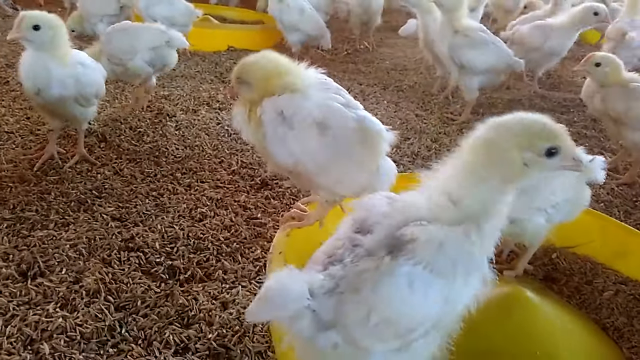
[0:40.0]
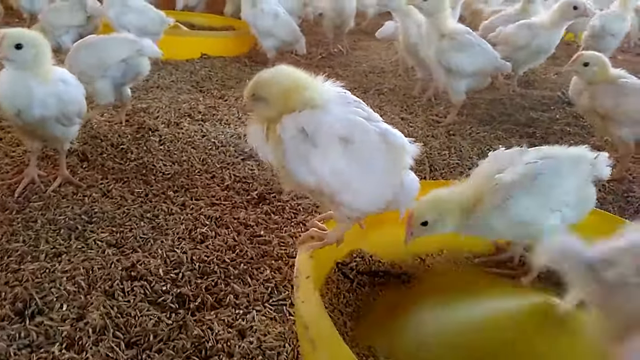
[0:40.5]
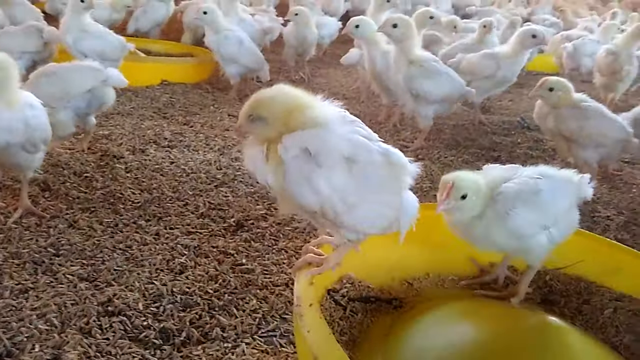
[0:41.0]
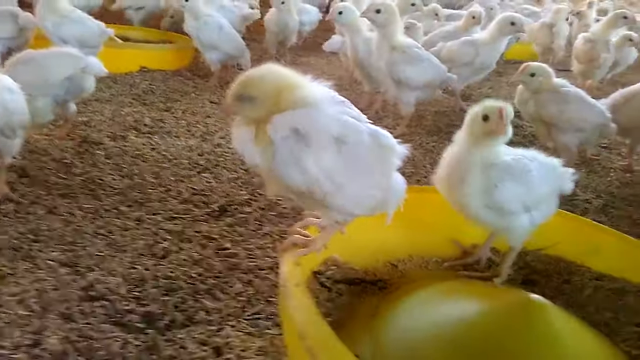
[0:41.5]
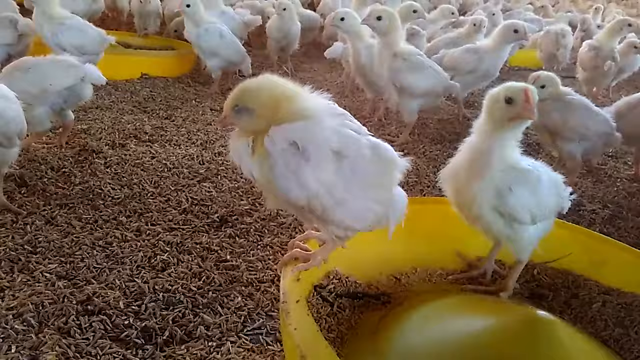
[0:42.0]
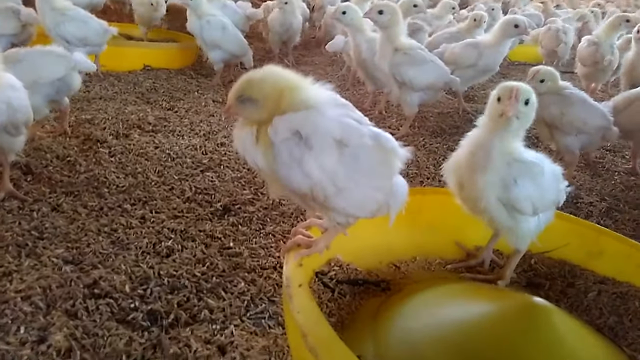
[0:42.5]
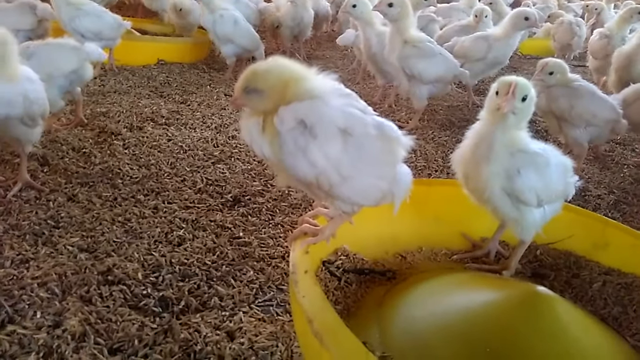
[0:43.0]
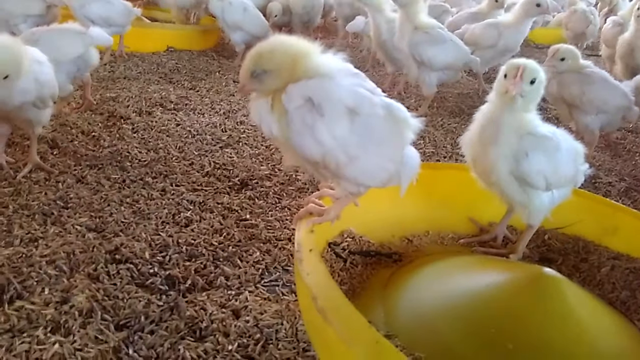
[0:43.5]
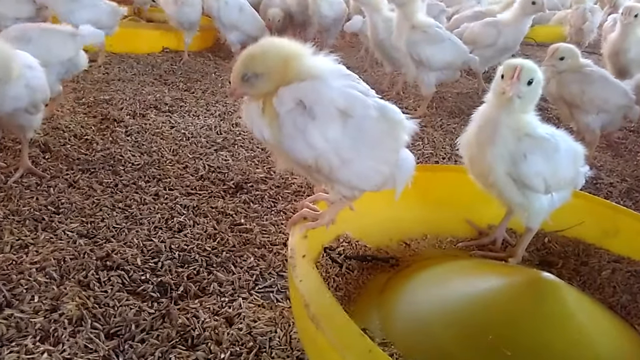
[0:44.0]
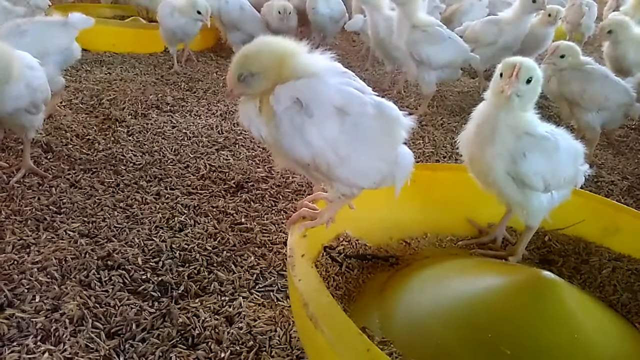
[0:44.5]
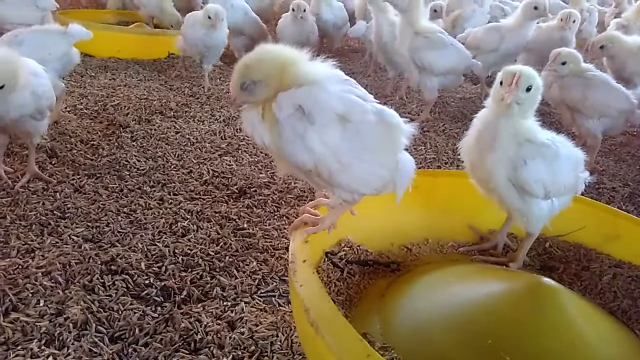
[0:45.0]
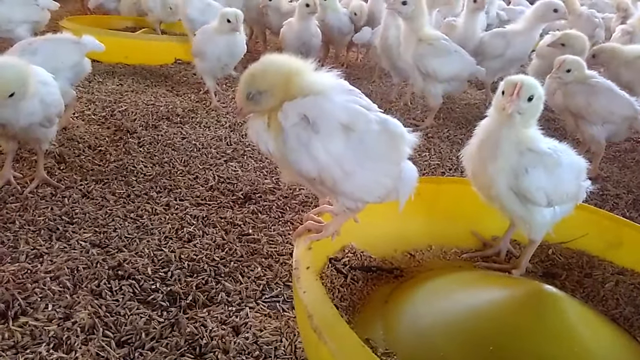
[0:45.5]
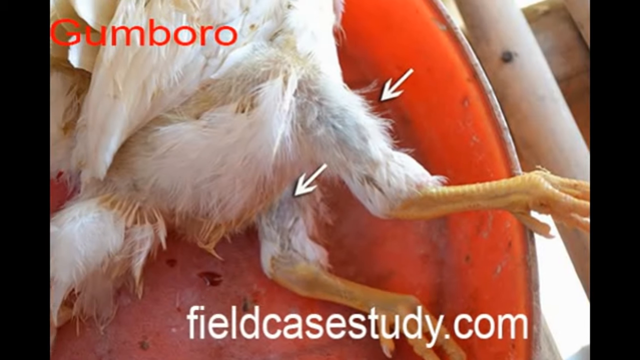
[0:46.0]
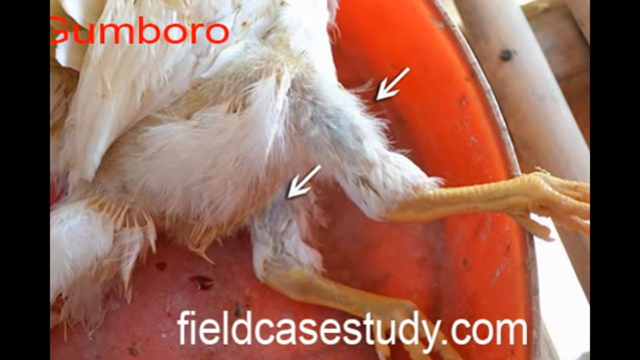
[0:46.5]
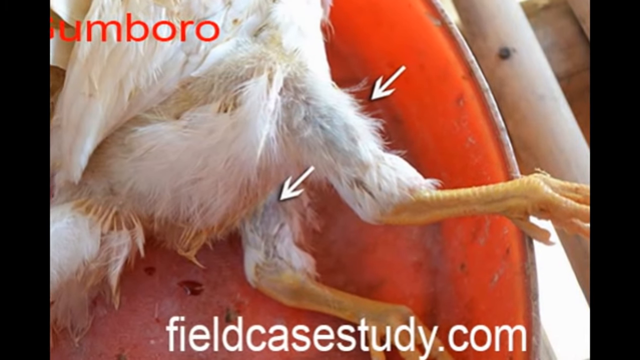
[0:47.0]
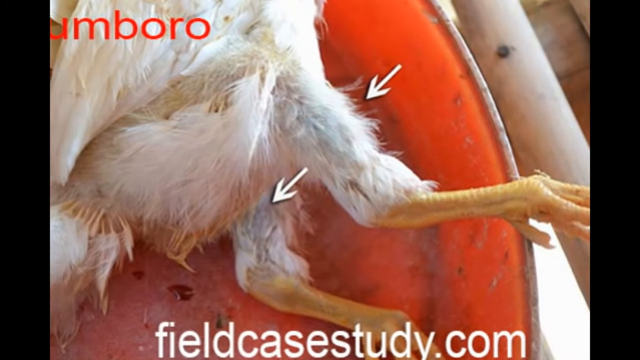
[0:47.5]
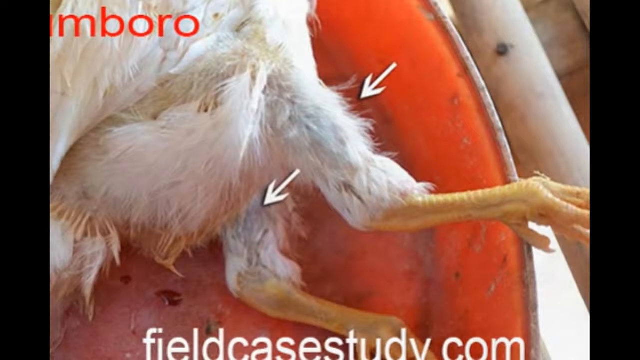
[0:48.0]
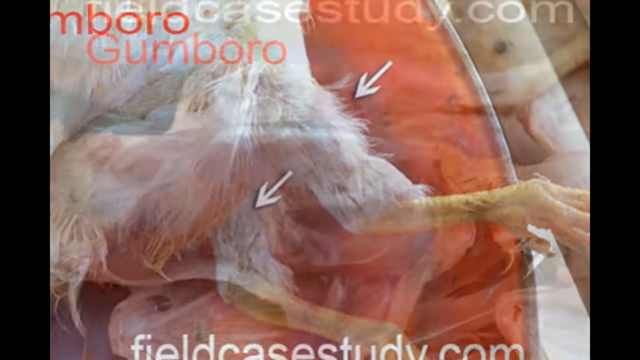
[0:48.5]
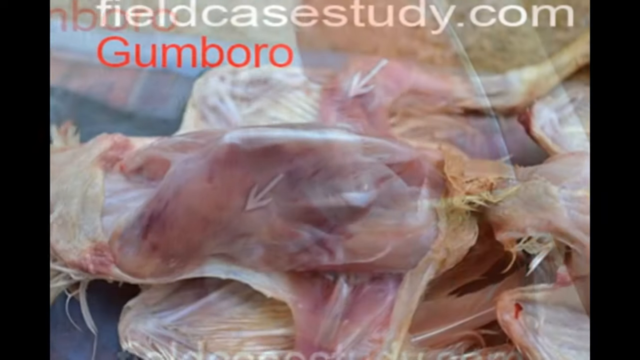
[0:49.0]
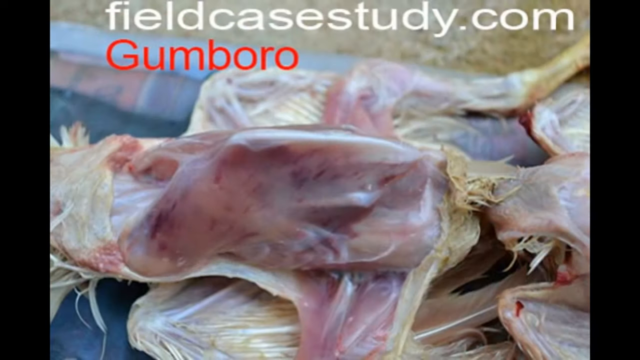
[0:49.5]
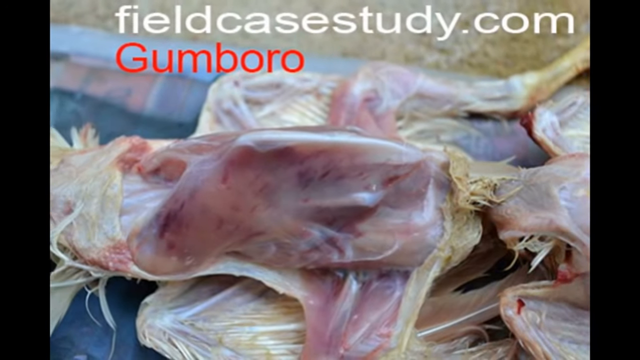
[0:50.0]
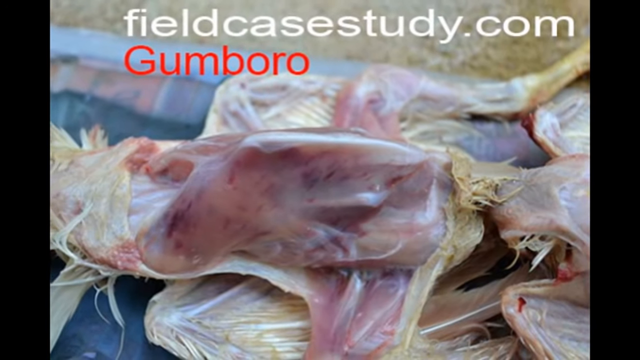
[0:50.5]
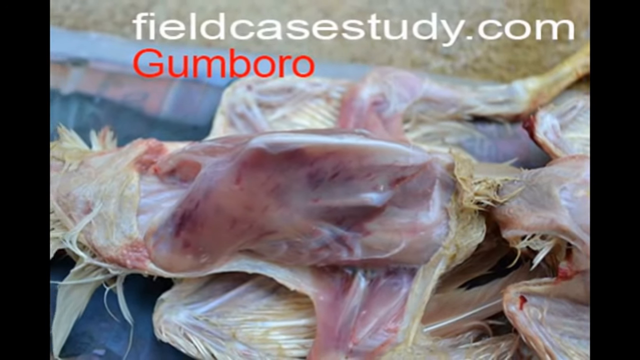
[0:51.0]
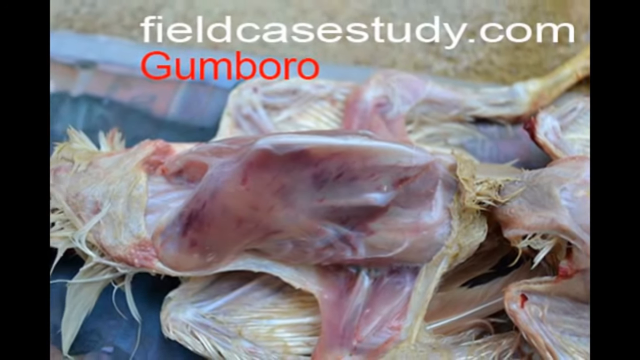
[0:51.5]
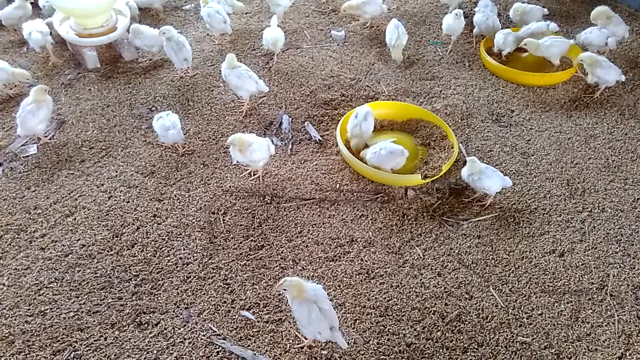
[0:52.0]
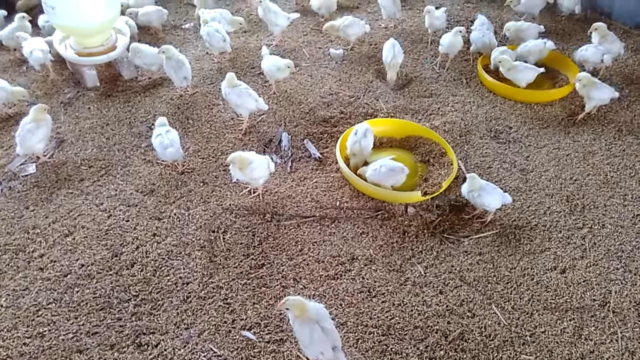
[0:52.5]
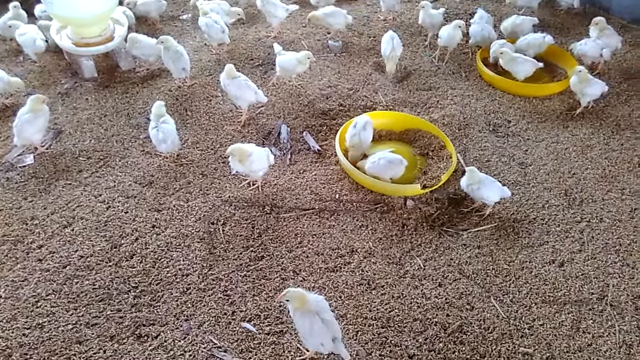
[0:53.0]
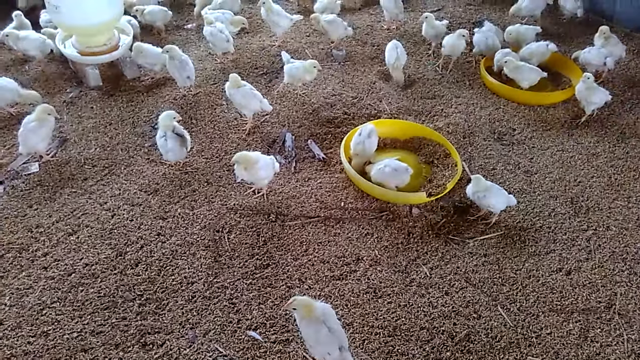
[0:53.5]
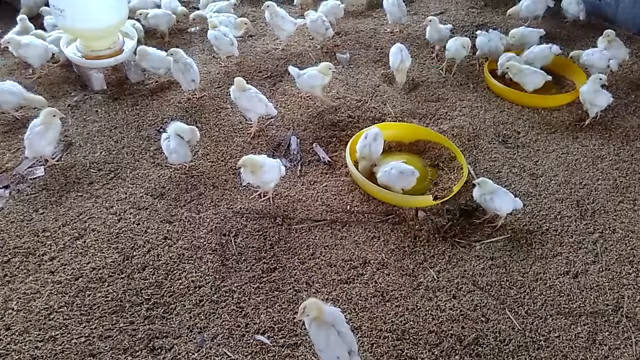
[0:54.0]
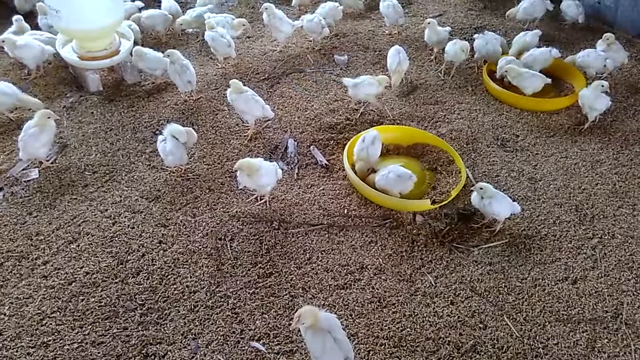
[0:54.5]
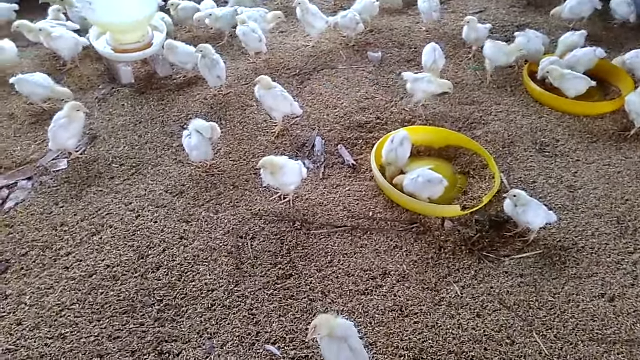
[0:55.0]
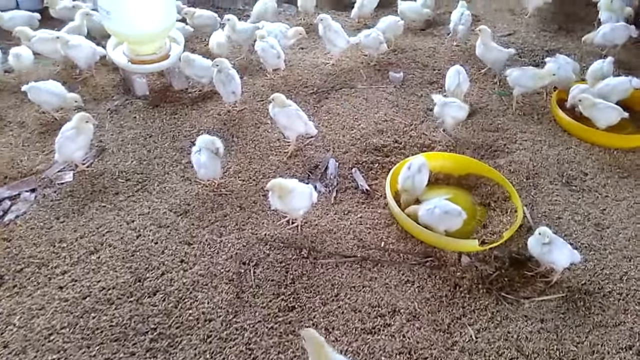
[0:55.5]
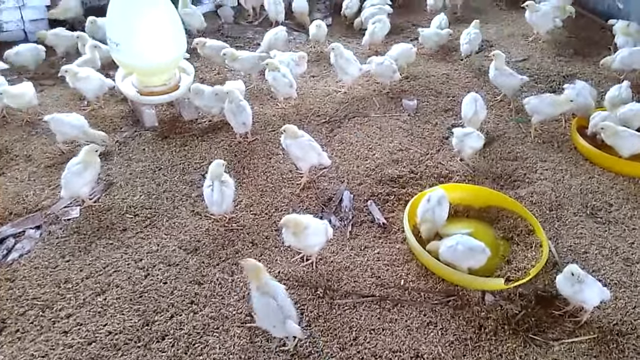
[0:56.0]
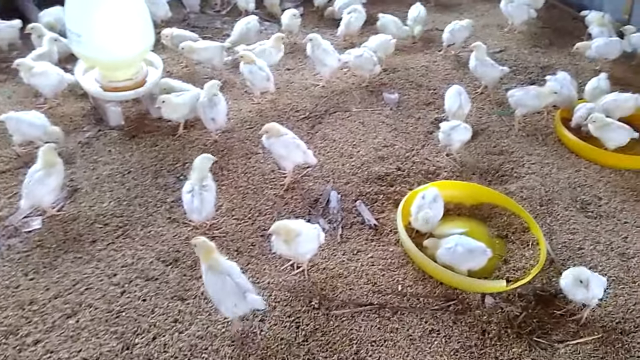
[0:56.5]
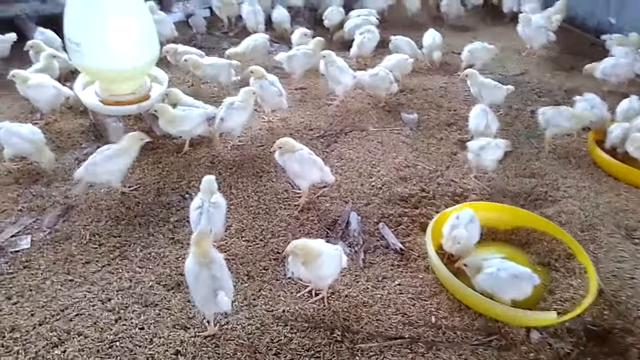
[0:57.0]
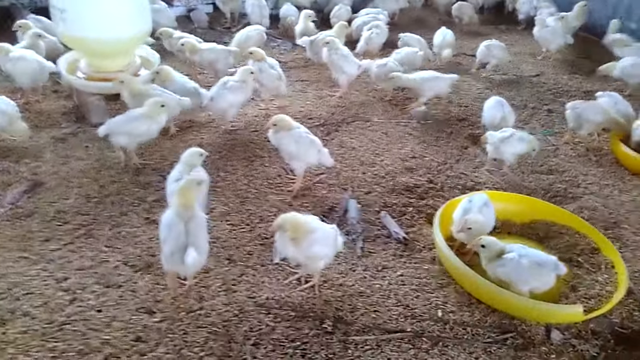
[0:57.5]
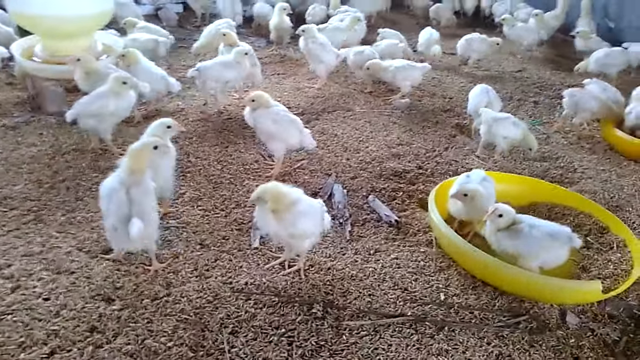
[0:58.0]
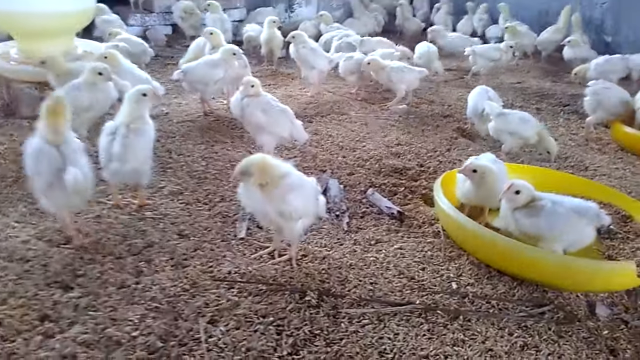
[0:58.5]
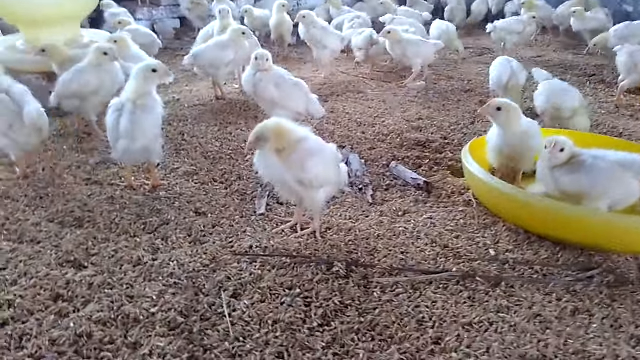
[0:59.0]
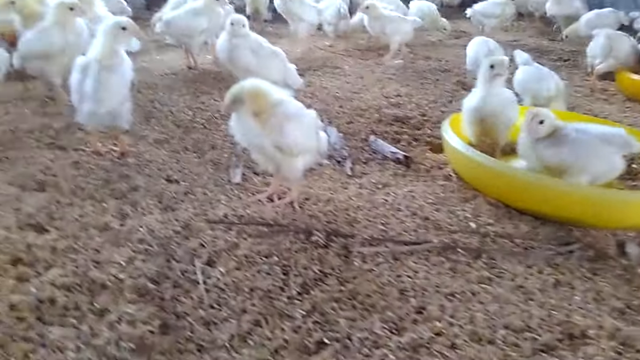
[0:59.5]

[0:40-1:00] The camera operator circles around the one chick that is standing still, getting a better view of it from the side. Every other baby chick in the area moves around, but this one has its eyes closed and is perched on the side of the yellow food bowl; it seems it might be sleeping, since it is so still. The scene then changes to a photo of what seems to be possibly an older chicken on its side, with text in the top left of the screen and two white arrows pointing to the chicken's upper thighs. Next comes another image, of a chicken that is either being de-feathered or split in half, with "fieldcasestudy.com" in big white text at the top of the screen and the same Gumboro name below it, as the photo zooms out to show what seems to be the chicken's carcass. The scene then cuts to all of the chicks in the feeding area running around and playing with each other.